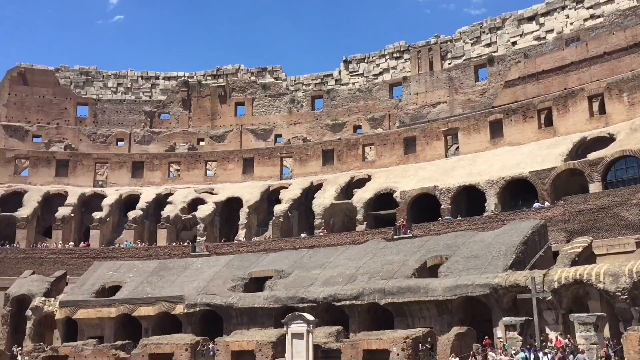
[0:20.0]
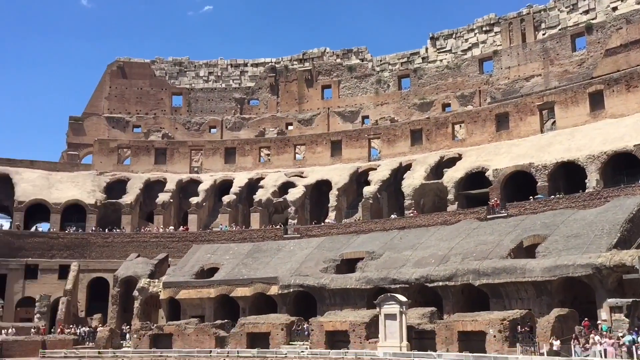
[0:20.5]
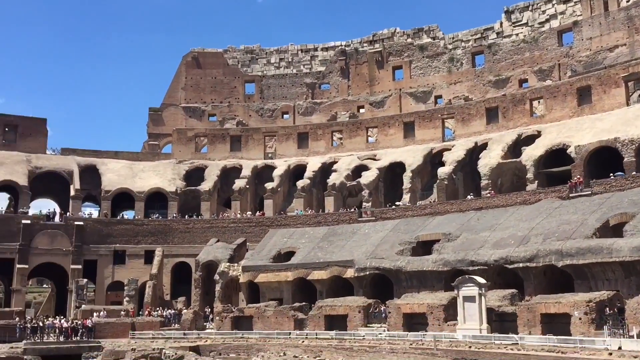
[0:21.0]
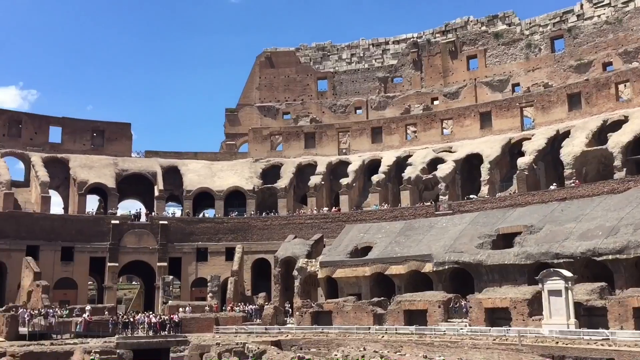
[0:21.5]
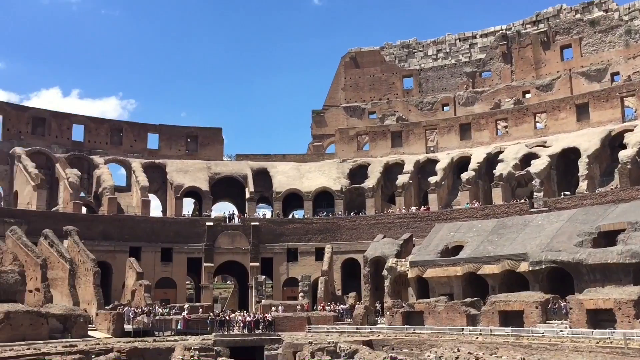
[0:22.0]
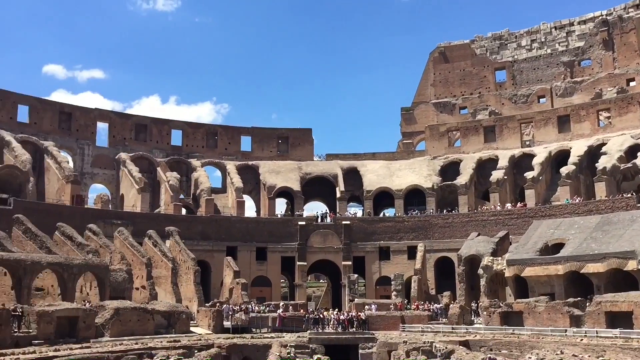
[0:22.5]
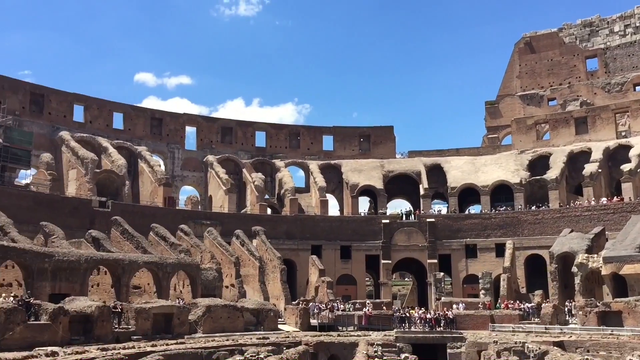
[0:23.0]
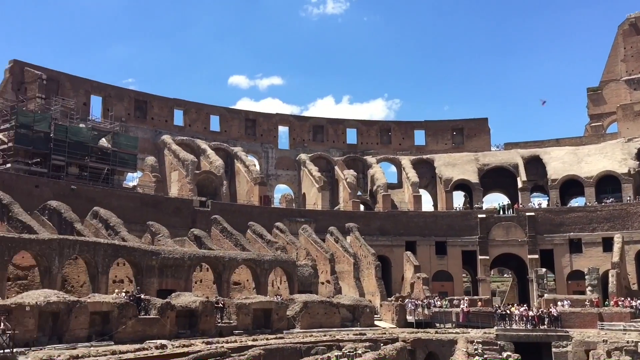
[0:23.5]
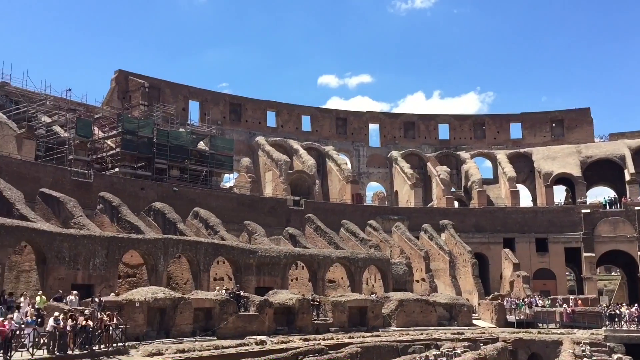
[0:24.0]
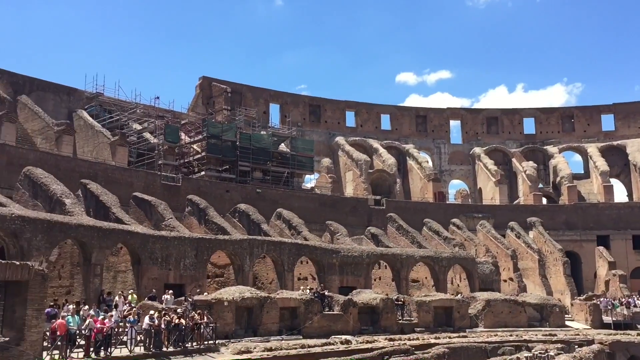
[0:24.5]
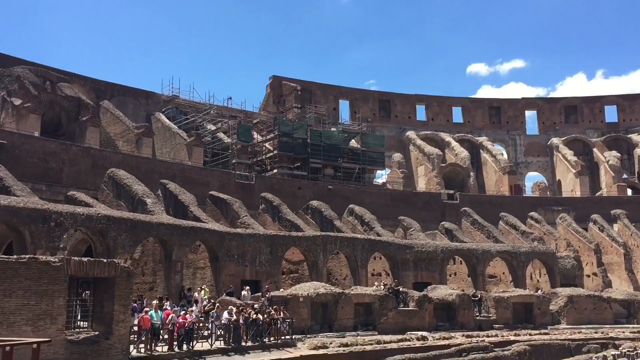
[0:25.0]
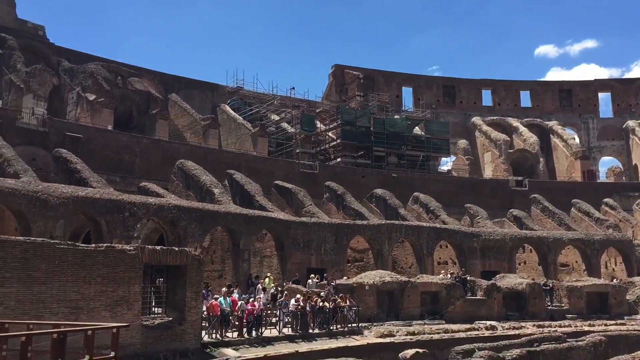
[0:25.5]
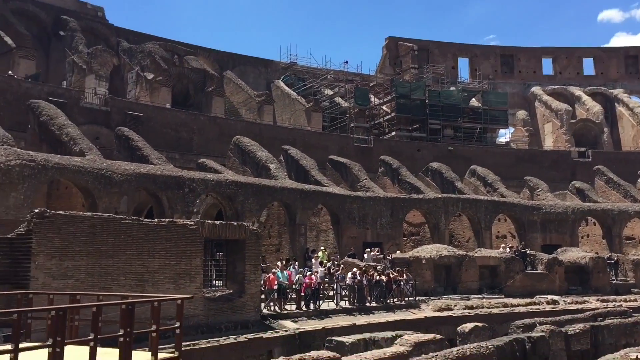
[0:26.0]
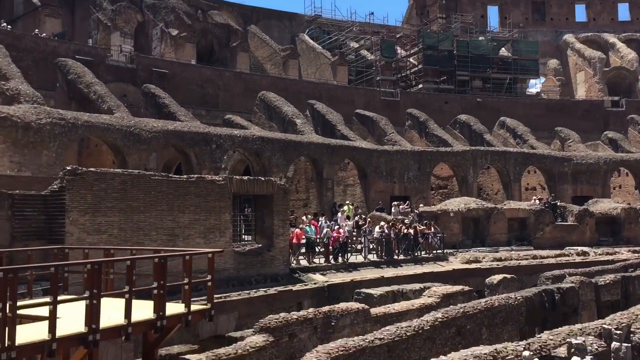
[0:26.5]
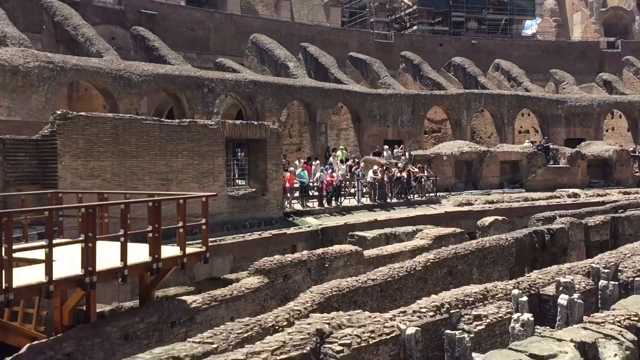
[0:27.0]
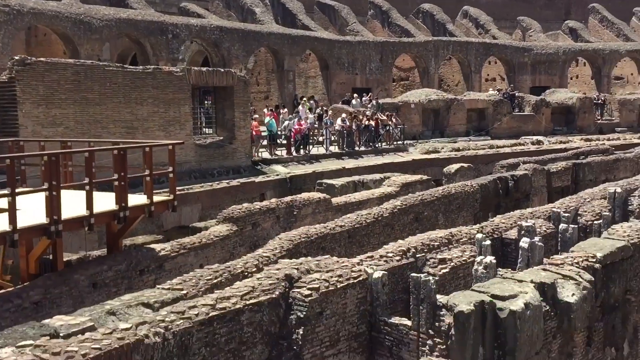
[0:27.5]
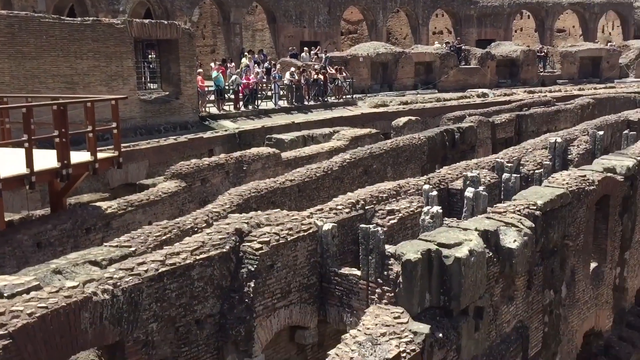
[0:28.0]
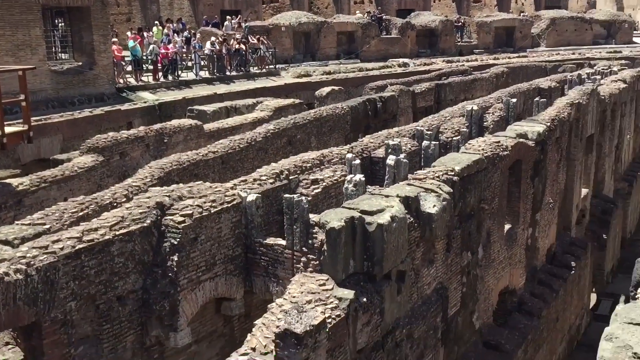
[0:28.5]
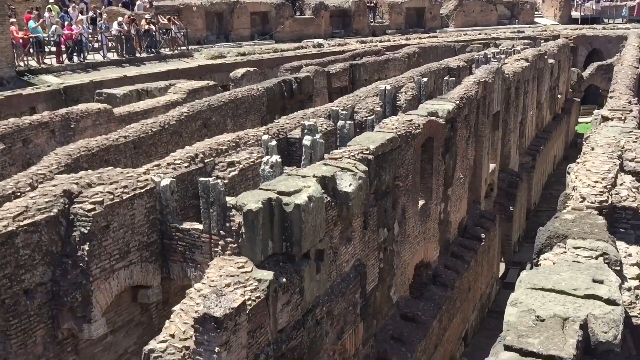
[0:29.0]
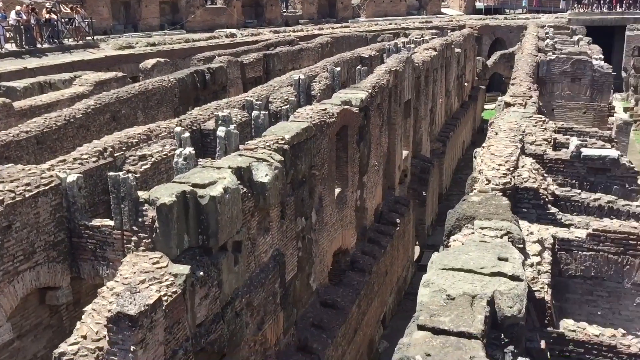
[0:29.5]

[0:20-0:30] Inside the Roman Colosseum, the camera pans completely around to show the interior walls, then pans down to the floor with its network of stone dividing walls. As it pans around the building, small groups of tourists are visible standing on platforms overlooking the ground on the Colosseum floor, and other tourists stand among the seats. It is a bright, clear day, and the sky above the Colosseum is very blue.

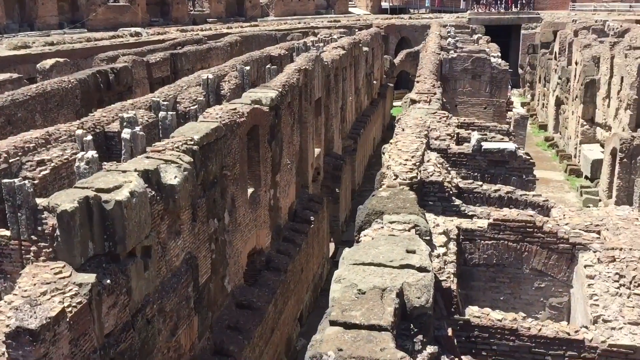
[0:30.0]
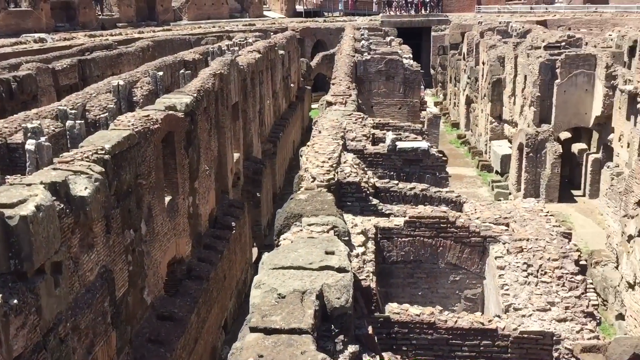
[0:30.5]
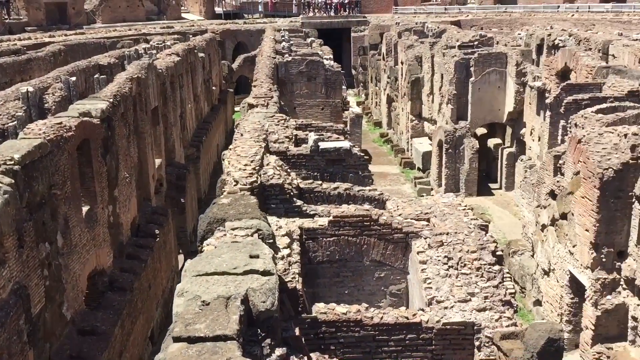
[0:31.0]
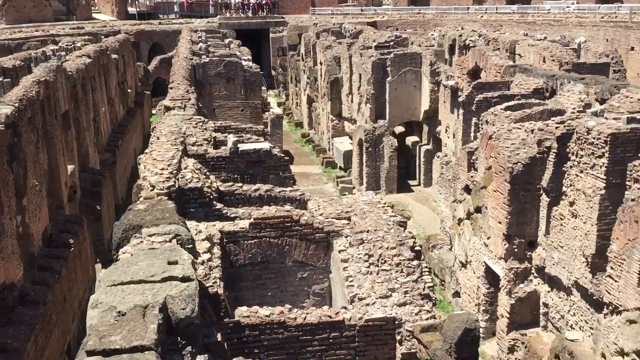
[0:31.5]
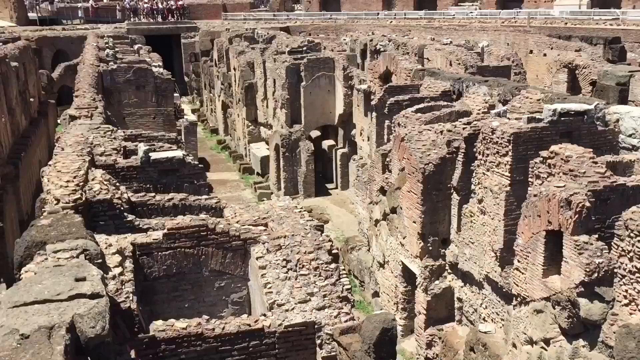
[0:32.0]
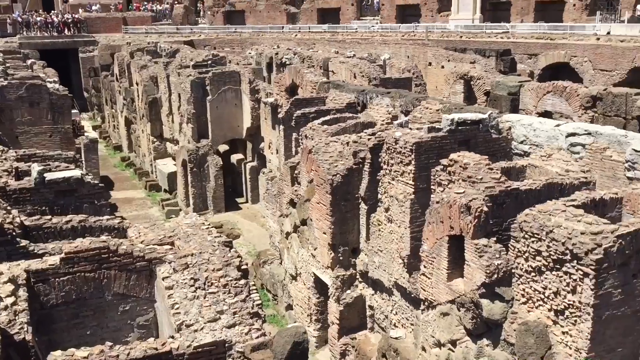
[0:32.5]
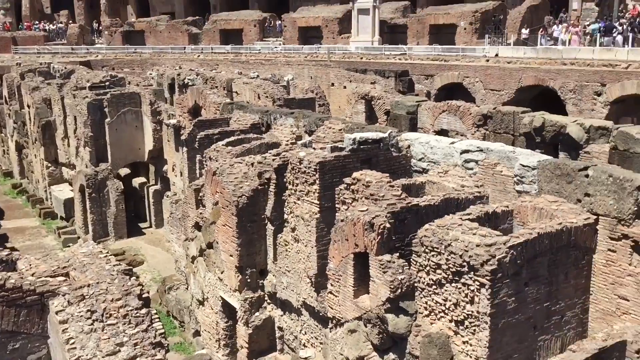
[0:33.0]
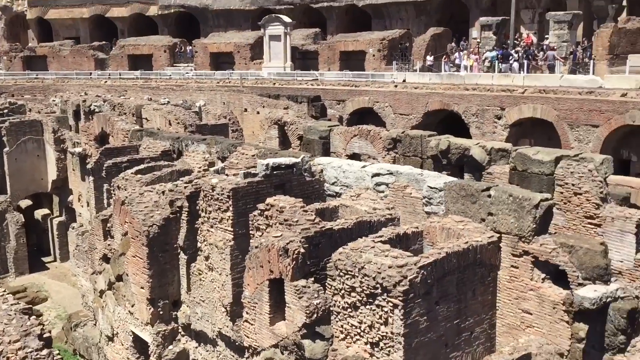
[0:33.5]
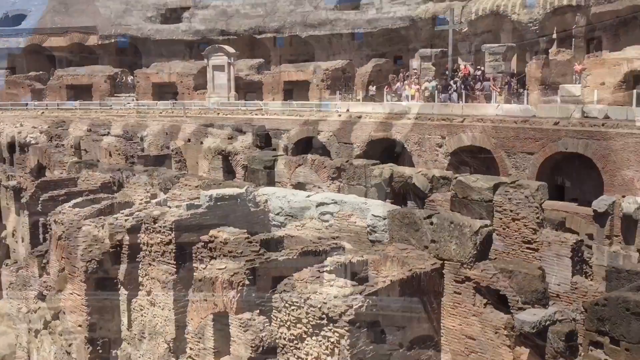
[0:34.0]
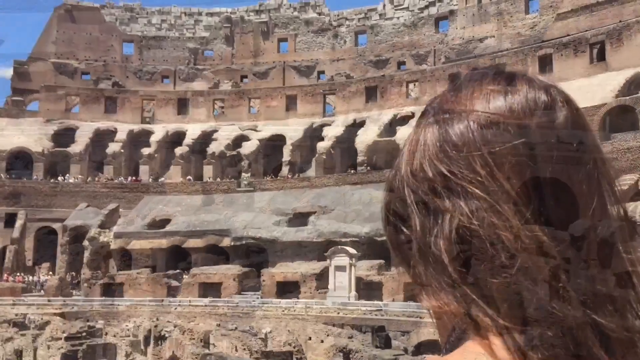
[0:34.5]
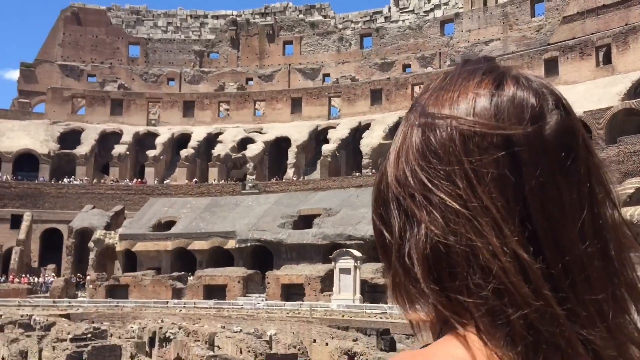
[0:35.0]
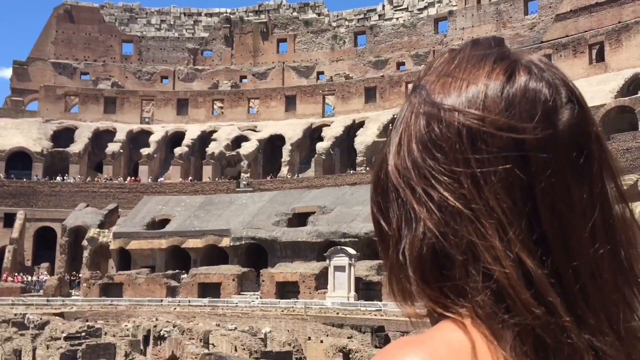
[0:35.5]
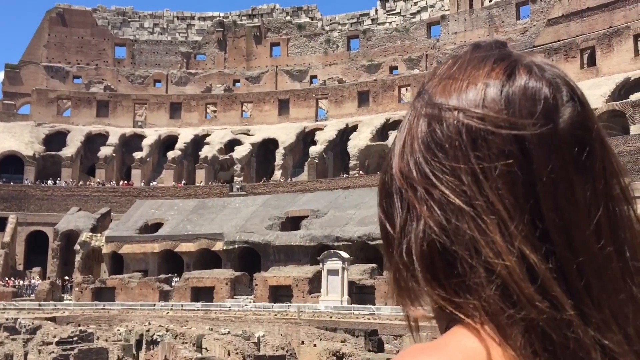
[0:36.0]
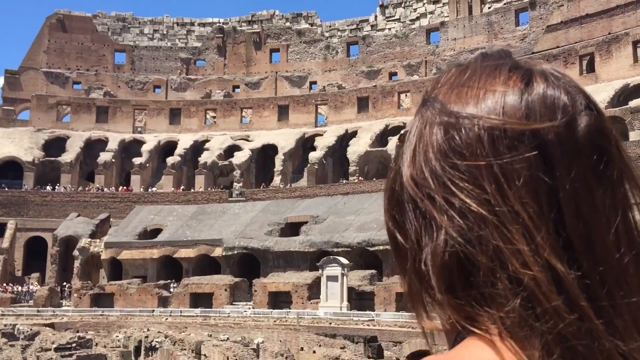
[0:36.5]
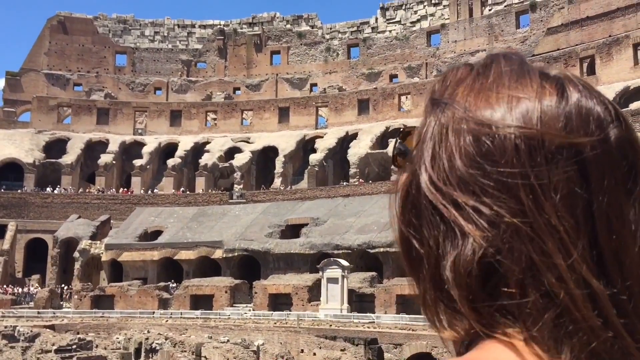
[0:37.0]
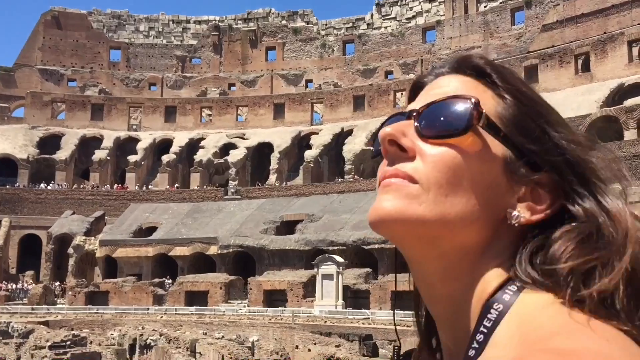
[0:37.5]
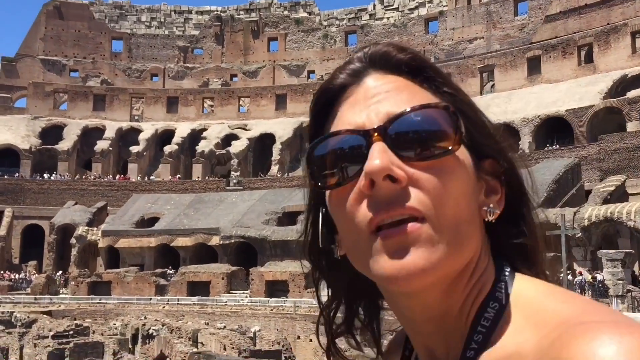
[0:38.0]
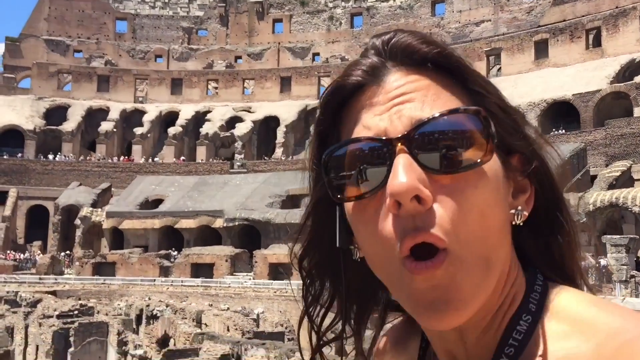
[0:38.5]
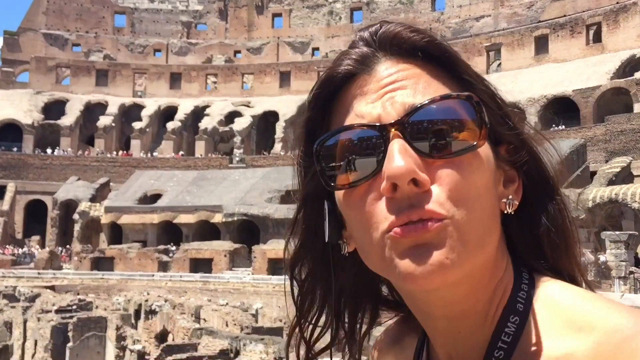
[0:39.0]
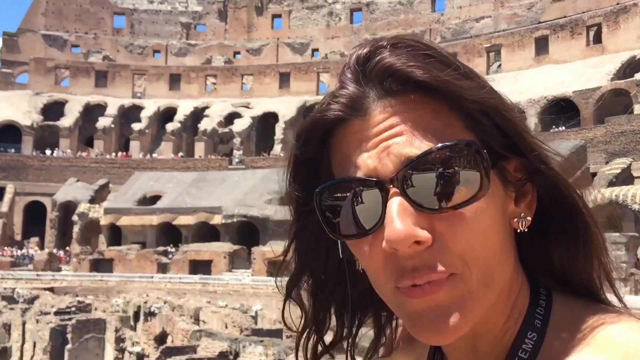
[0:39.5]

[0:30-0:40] Inside the Roman Colosseum, the camera is focused on the floor, showing the decaying stone walls that made up the network under the floor, with some grass growing among them. The camera pans completely over the top of this section. As it pans to the right, people are visible standing along a platform overlooking this area, where a large wooden cross is installed. The scene fades to the back of a woman's head as she looks up at the walls of the Colosseum. She keeps looking around, then turns to face the camera and briefly speaks to it. She has long brown hair and wears sunglasses and gold clip earrings.